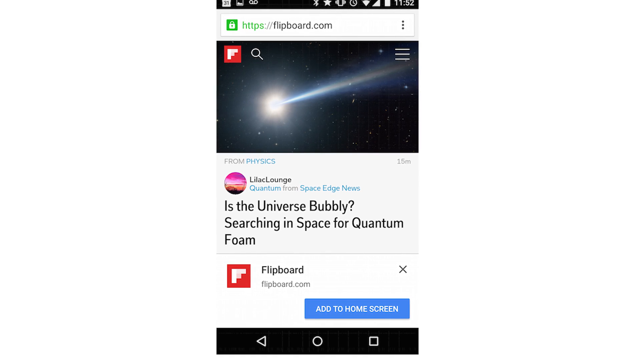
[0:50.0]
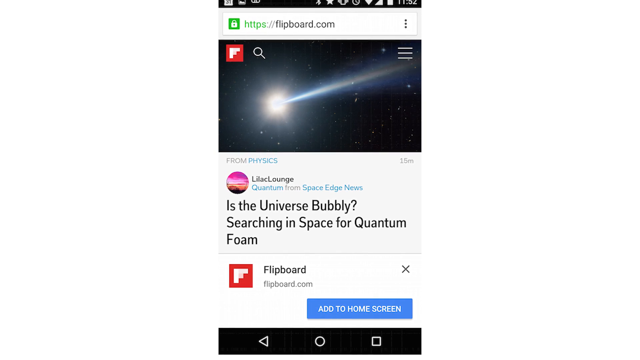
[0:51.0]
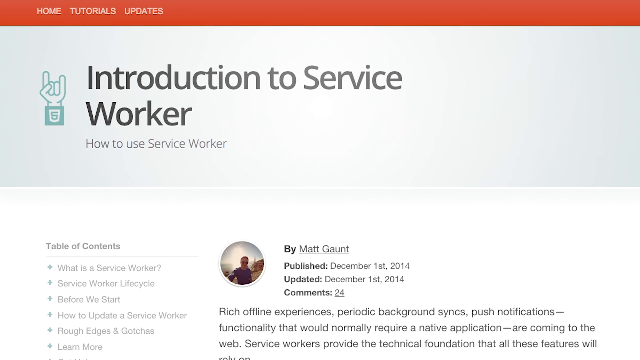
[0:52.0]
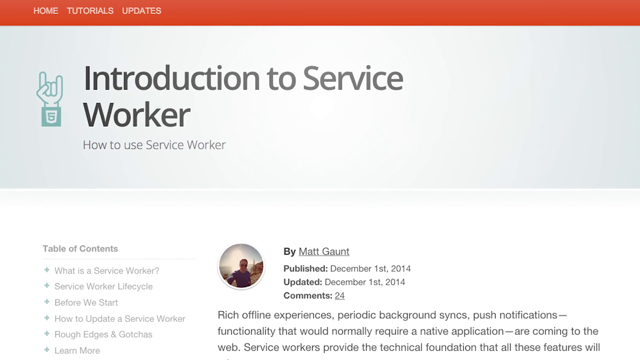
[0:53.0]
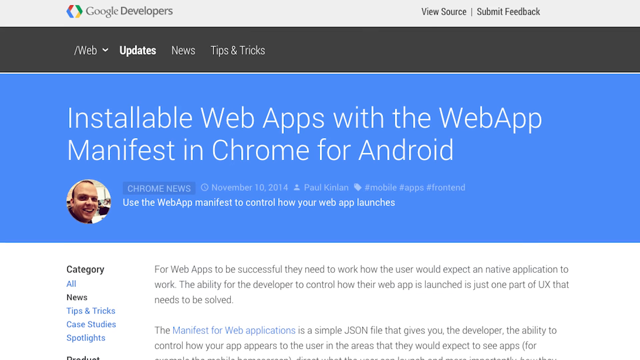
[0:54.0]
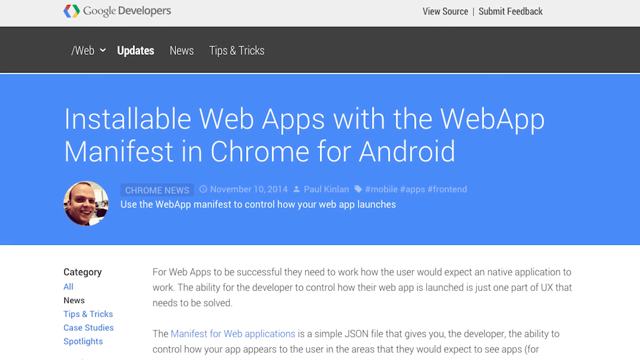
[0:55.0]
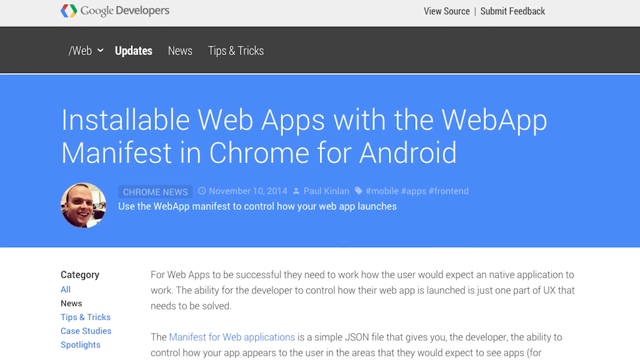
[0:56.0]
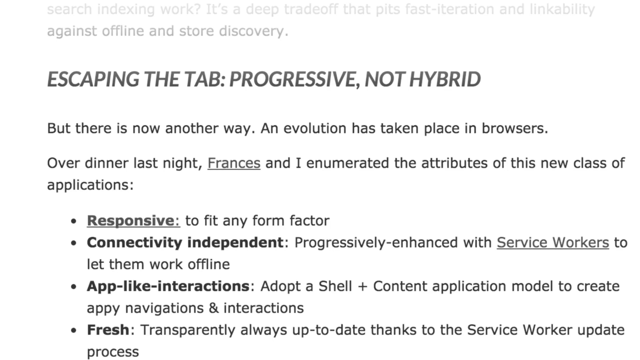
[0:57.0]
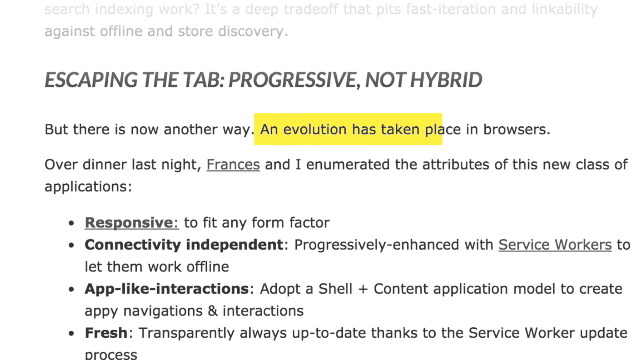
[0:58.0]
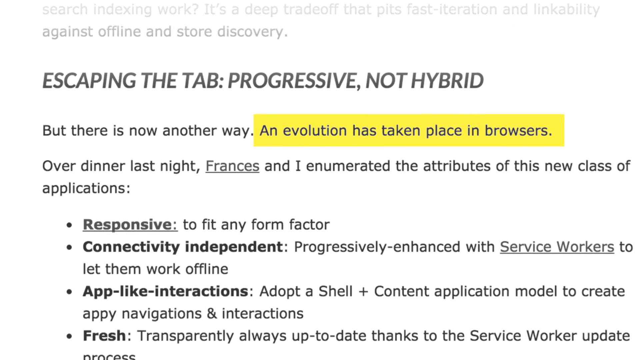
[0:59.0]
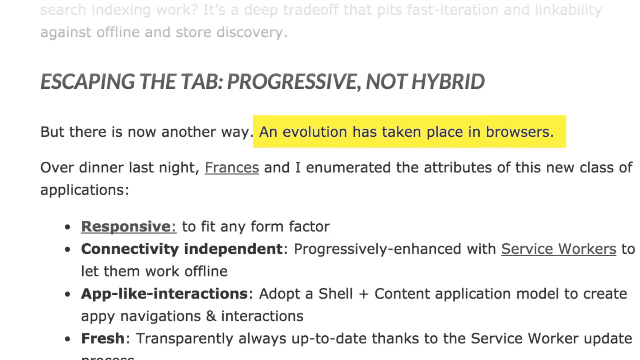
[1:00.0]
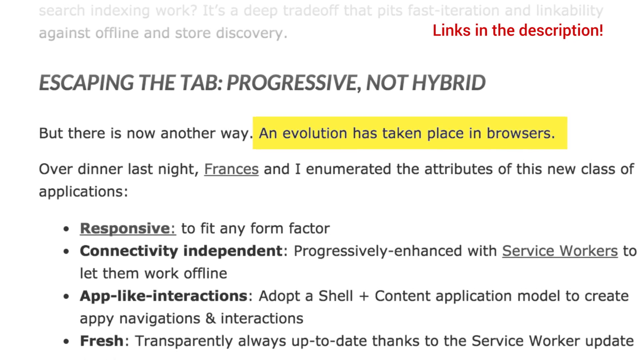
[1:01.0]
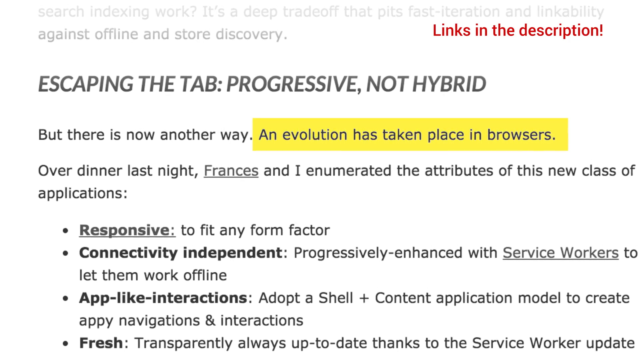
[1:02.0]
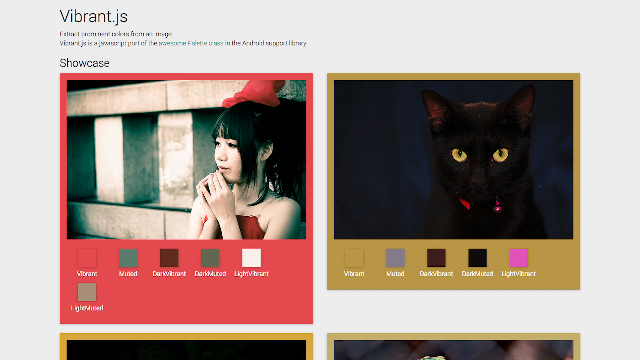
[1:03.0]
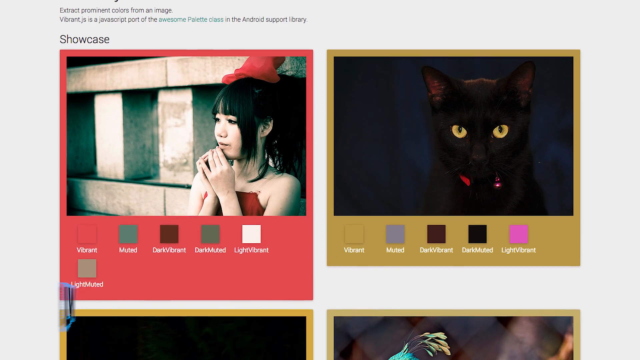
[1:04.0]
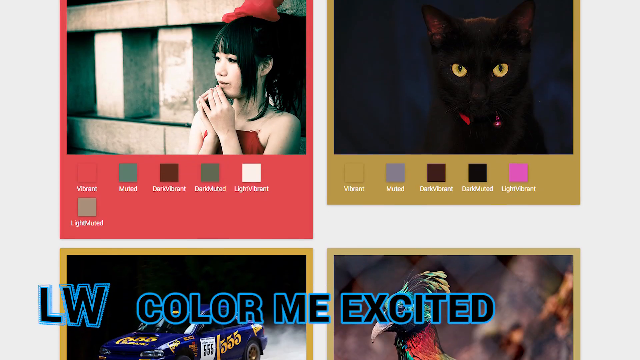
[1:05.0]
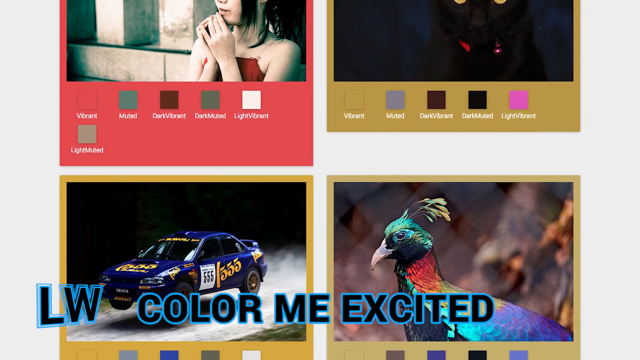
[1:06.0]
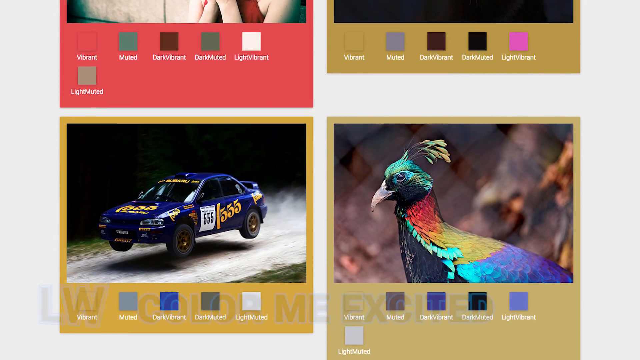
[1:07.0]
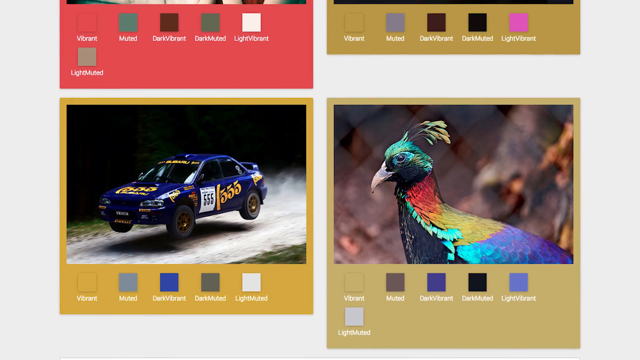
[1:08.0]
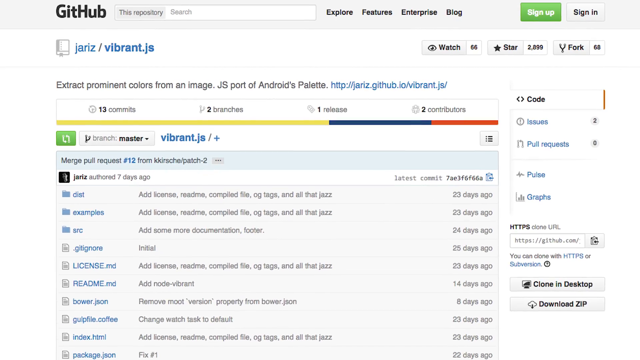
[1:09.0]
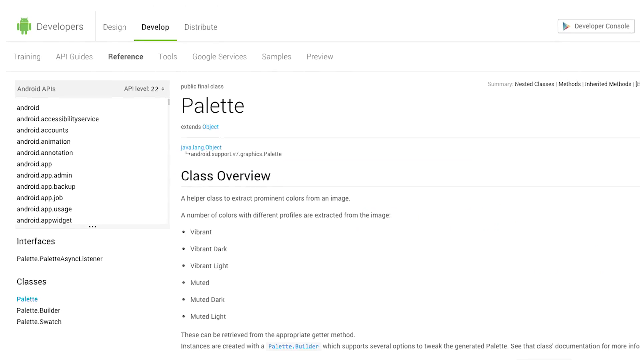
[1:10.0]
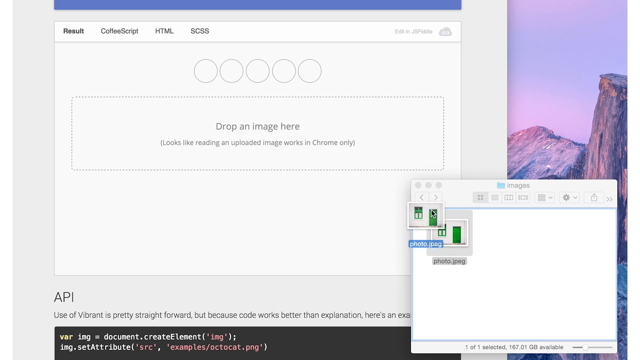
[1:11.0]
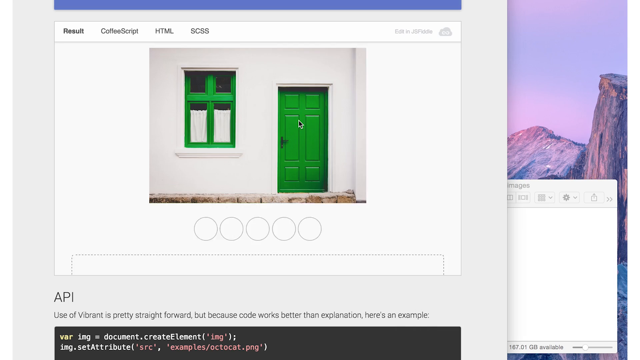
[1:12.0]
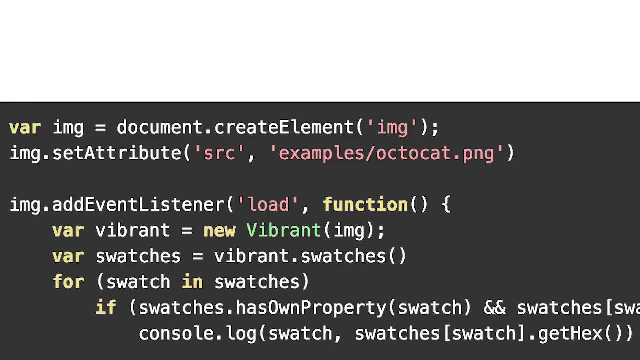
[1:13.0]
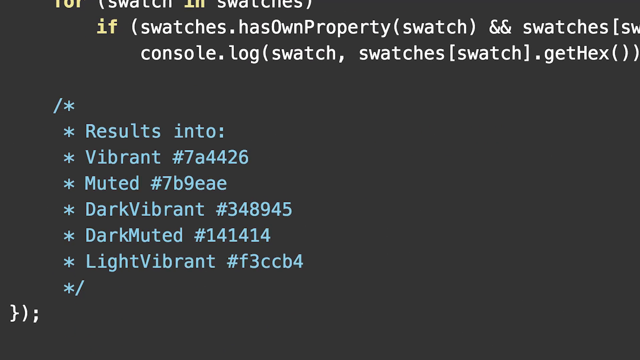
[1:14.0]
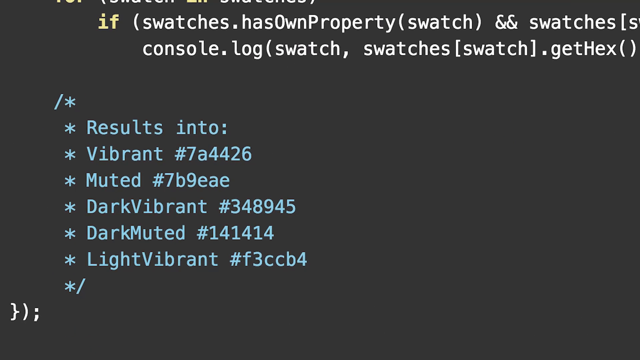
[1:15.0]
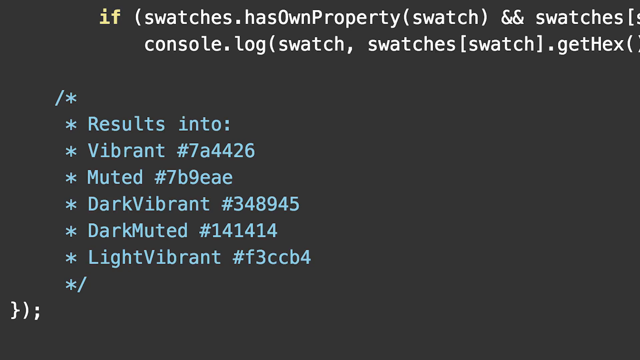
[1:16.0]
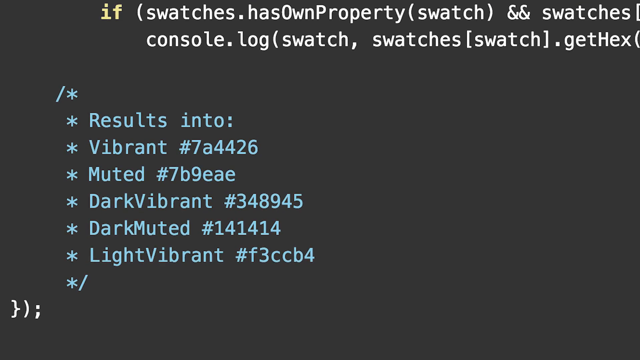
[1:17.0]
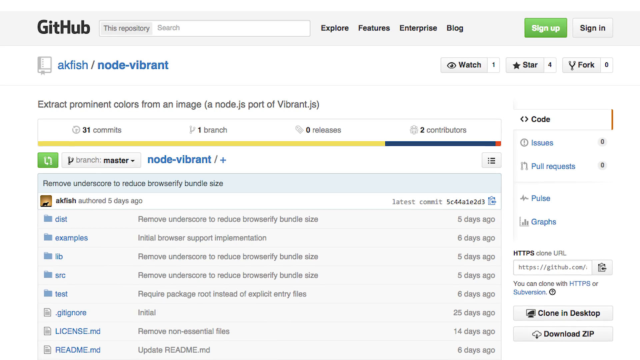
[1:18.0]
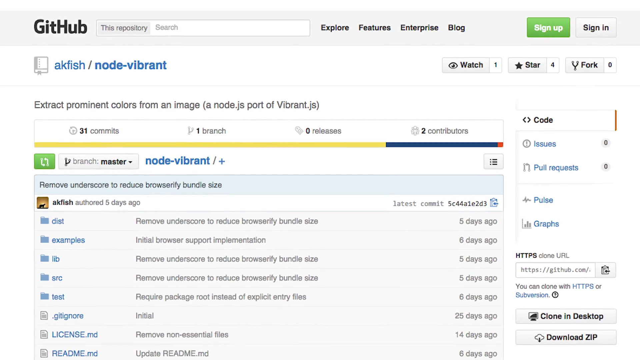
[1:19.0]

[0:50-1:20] The screen moves to a new web page titled "Introduction to Service Worker" and "How to Use Service Worker", written by Matt Gaunt. Another article appears, called "Installable Web Apps with the Web App Manifest in Chrome for Android", with text below. A snippet of text called "Escaping the Tab Progressive Not Hybrid" follows; its first sentence says there is now another way and evolution has taken place in browsers, and that last sentence is highlighted in yellow. In the top right, "links in the description" flashes on screen in red. A showcase page follows, with different boxes containing different images and colours below them. Next is a website, Github, saying "extract prominent colours from an image", with a list of different colours. Then a page titled "palette" appears; the person drags an image from their documents into the website, and it loads the colour in the picture, a dark green, showing the results in the bottom left corner.